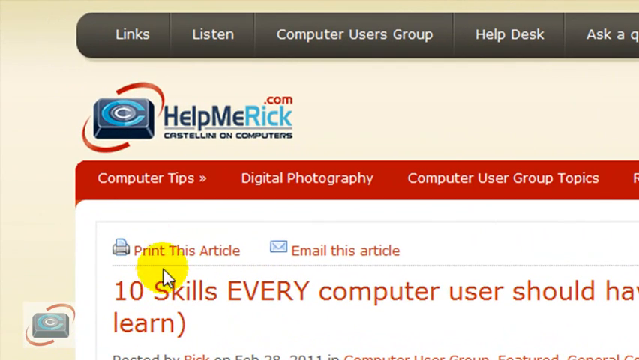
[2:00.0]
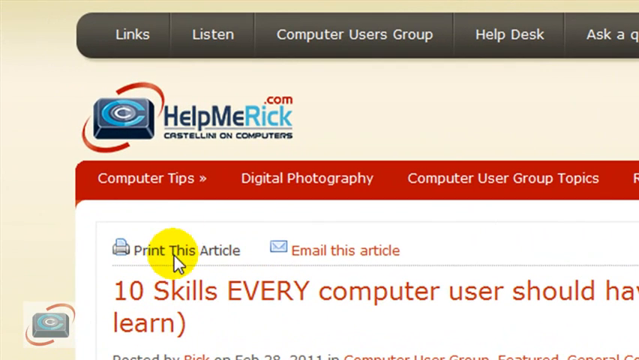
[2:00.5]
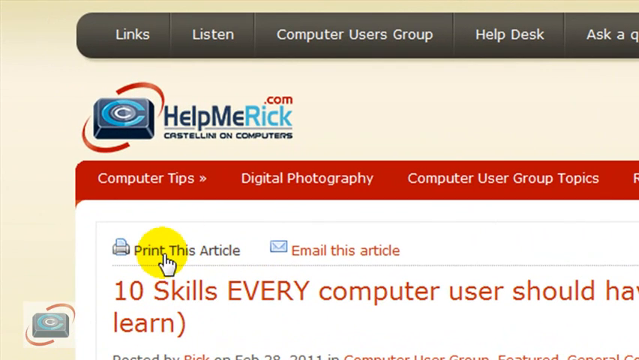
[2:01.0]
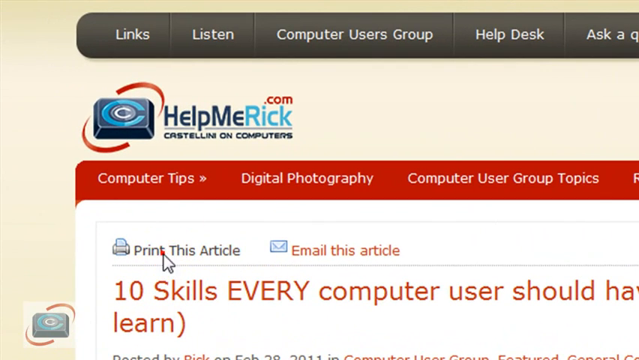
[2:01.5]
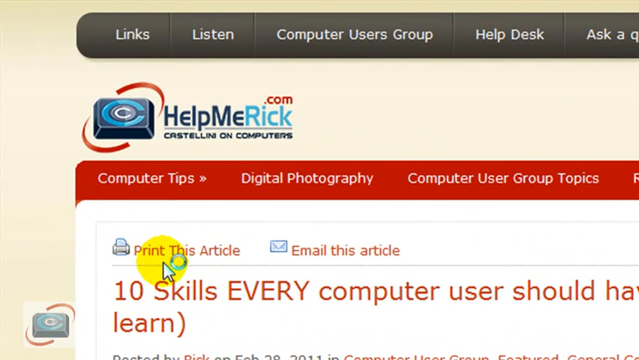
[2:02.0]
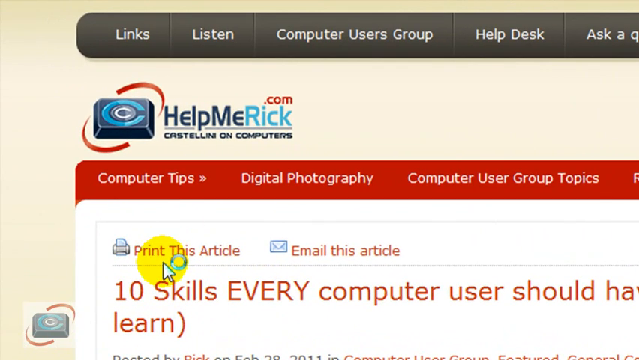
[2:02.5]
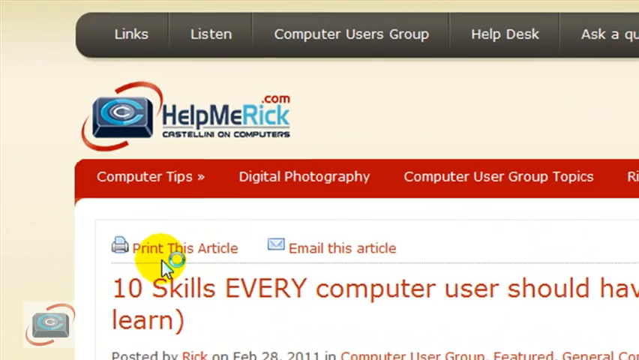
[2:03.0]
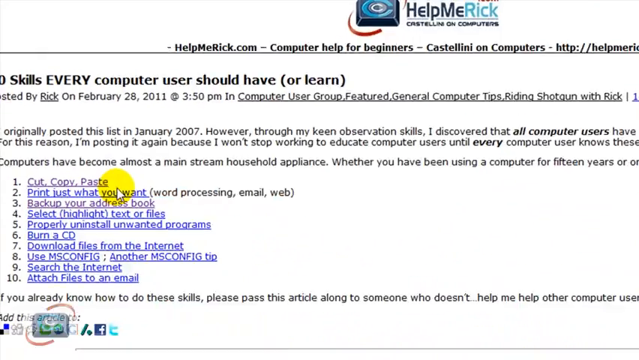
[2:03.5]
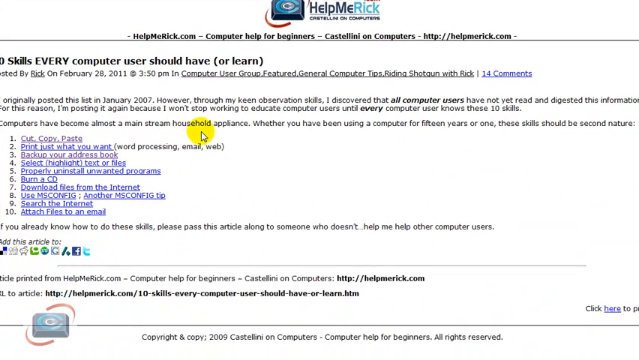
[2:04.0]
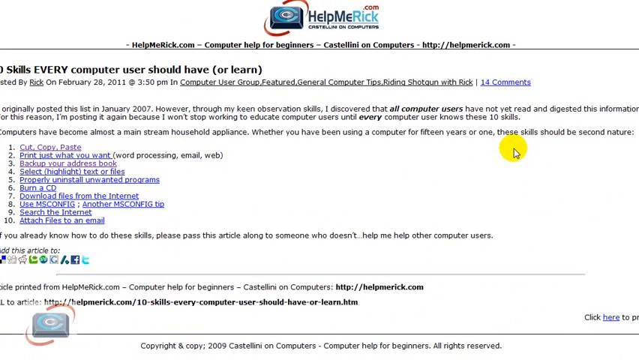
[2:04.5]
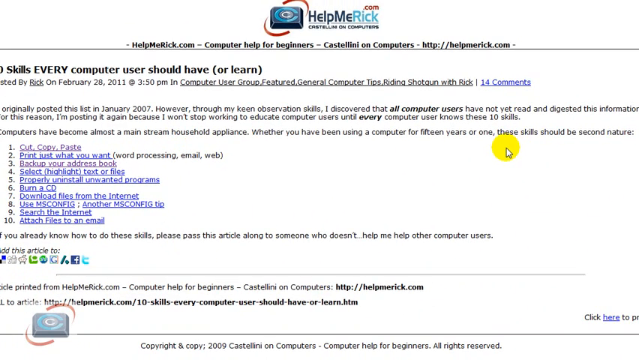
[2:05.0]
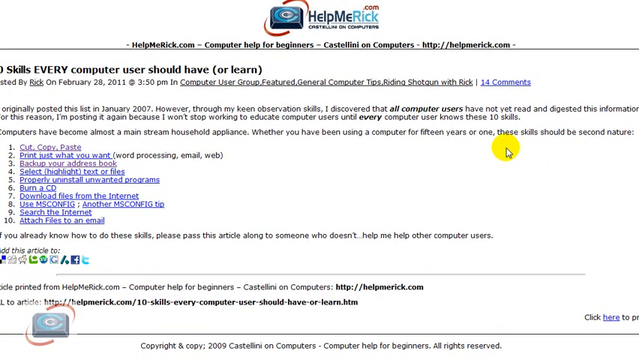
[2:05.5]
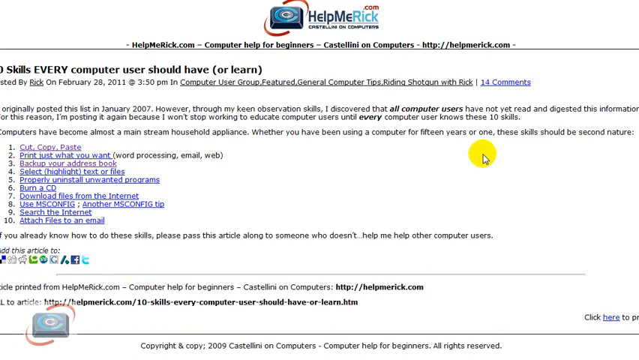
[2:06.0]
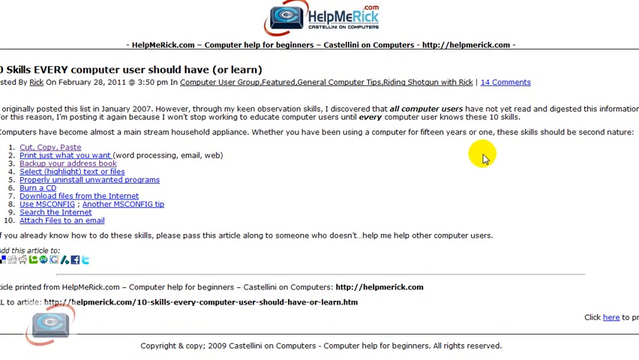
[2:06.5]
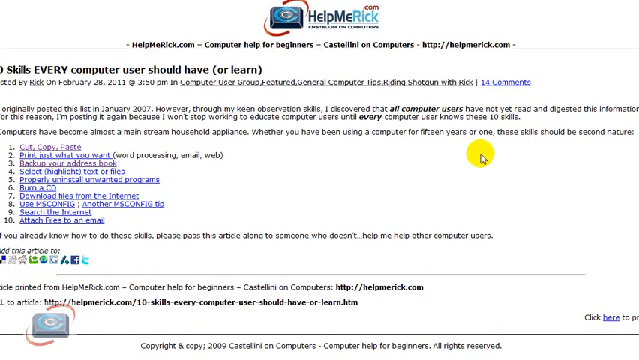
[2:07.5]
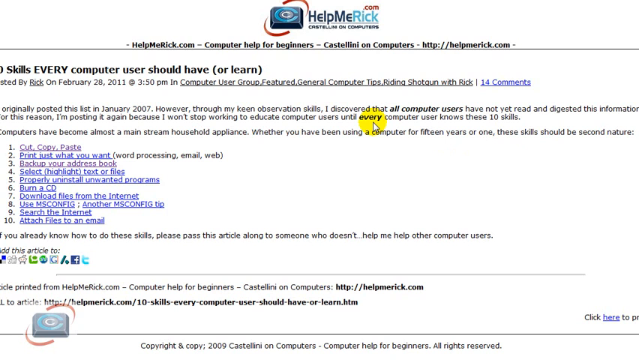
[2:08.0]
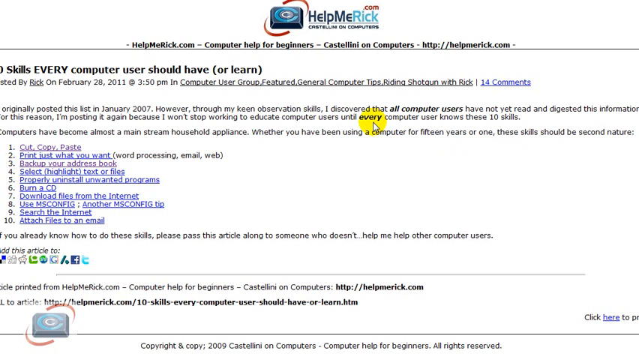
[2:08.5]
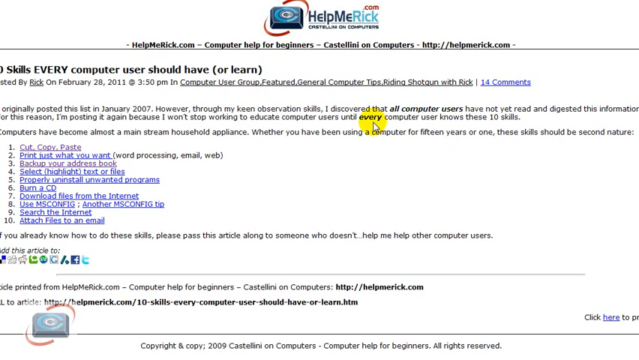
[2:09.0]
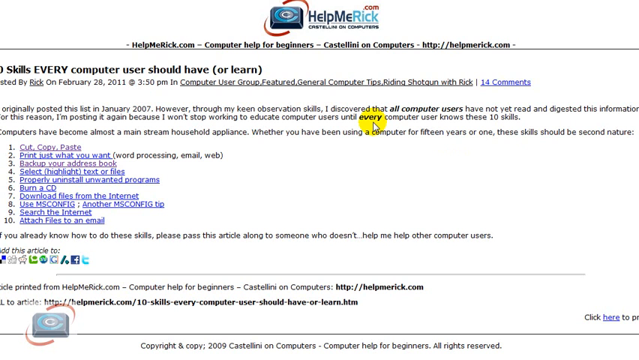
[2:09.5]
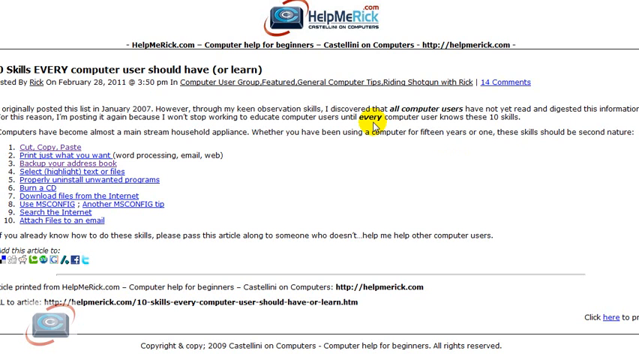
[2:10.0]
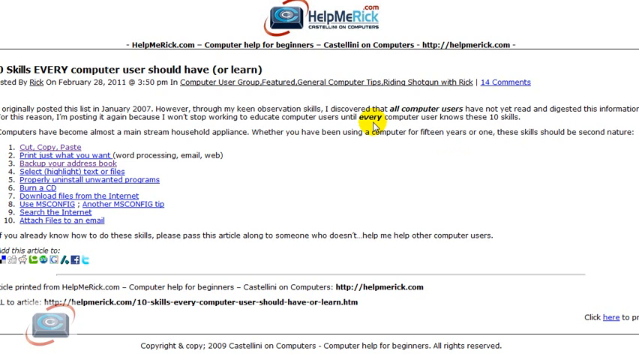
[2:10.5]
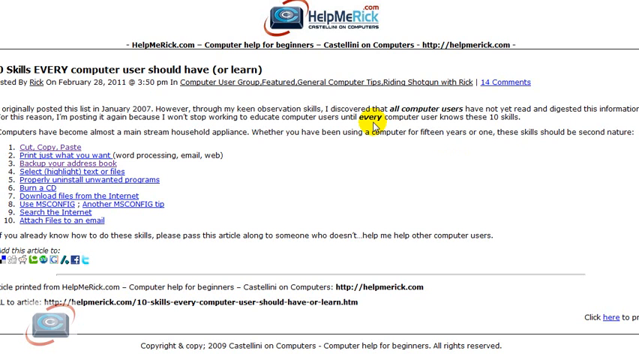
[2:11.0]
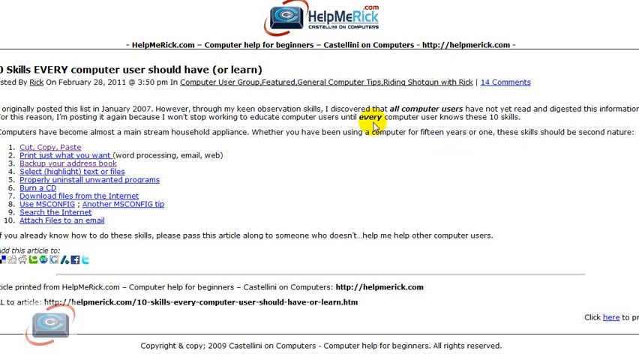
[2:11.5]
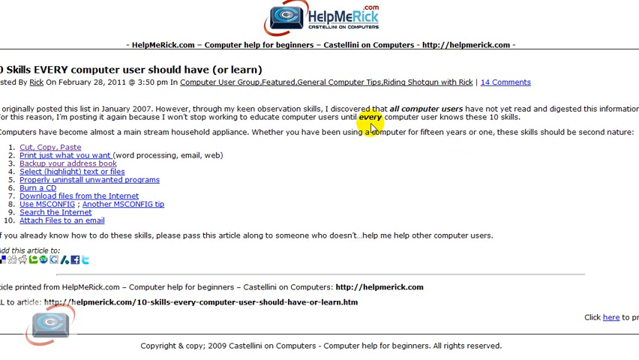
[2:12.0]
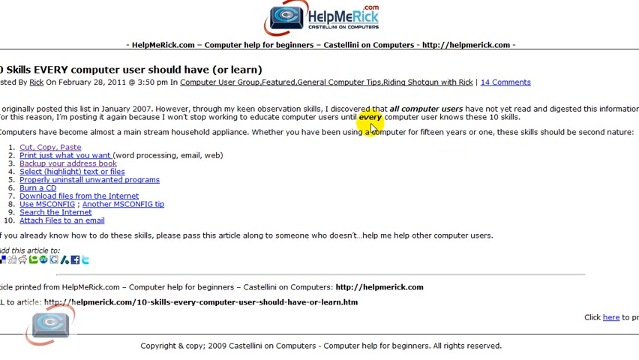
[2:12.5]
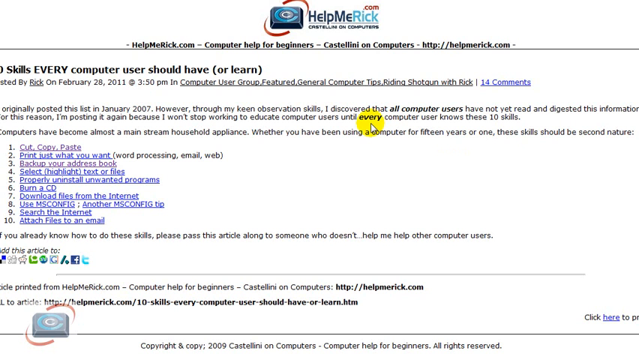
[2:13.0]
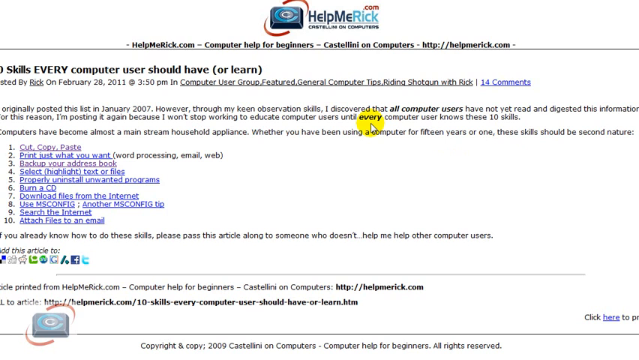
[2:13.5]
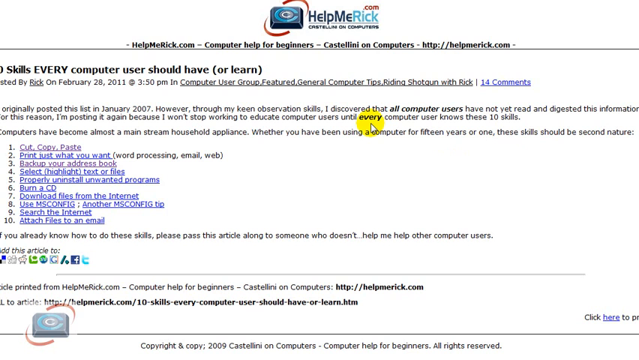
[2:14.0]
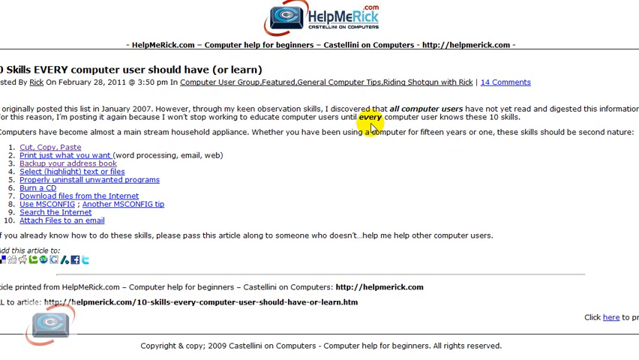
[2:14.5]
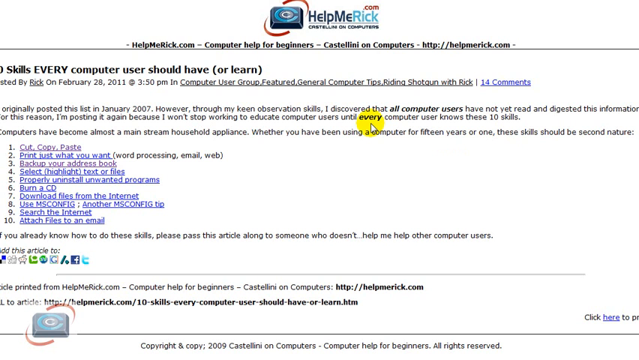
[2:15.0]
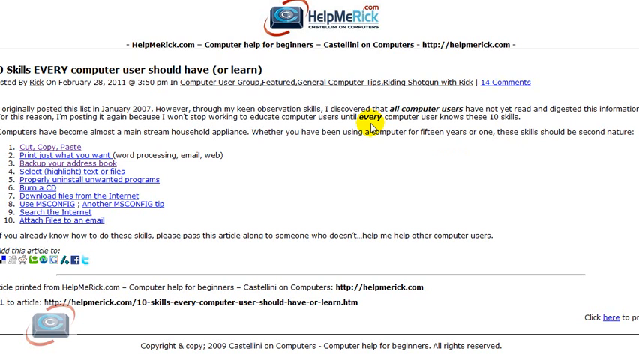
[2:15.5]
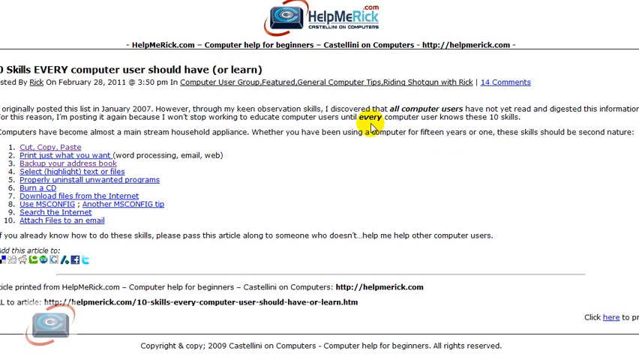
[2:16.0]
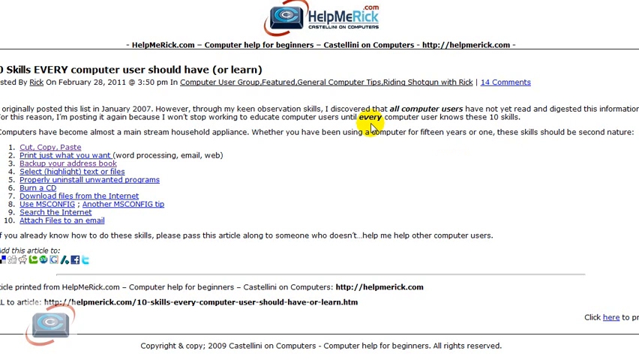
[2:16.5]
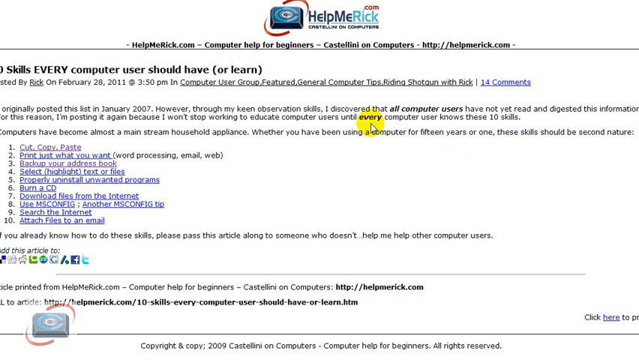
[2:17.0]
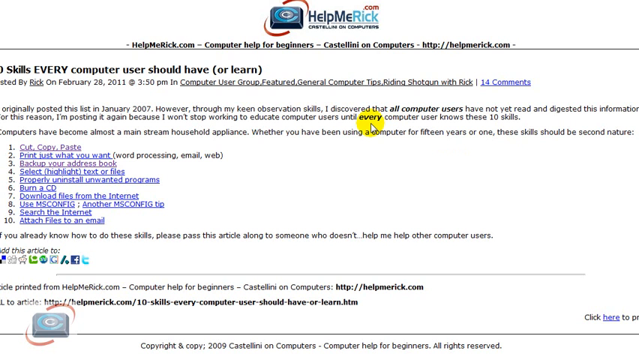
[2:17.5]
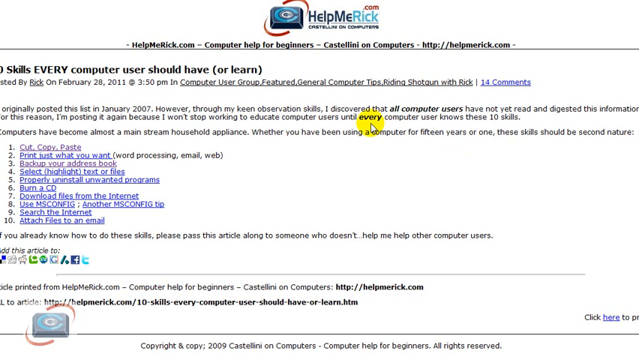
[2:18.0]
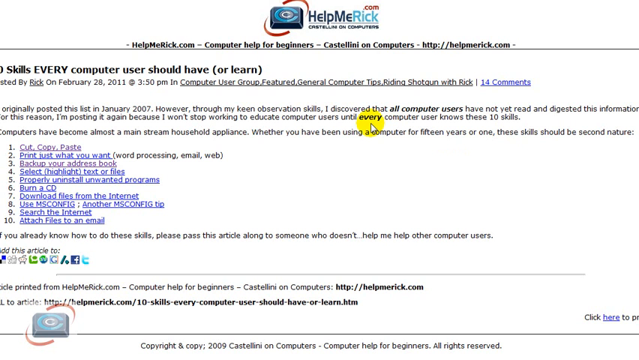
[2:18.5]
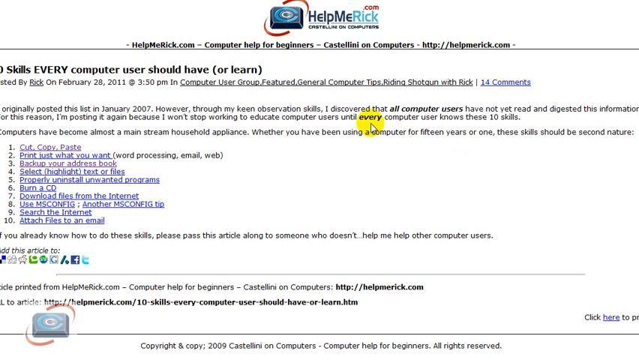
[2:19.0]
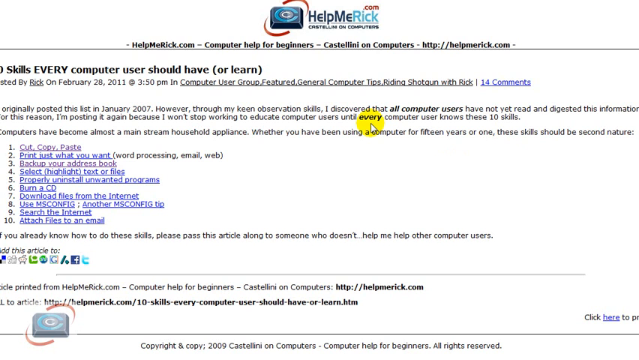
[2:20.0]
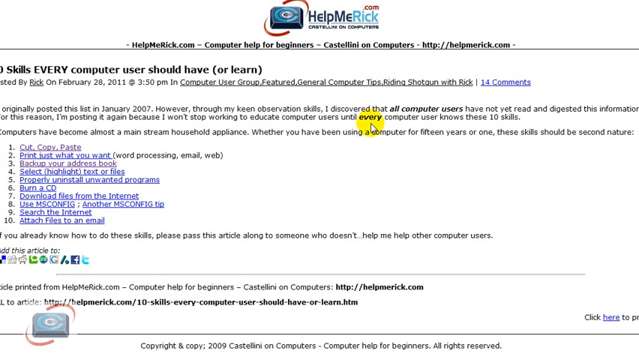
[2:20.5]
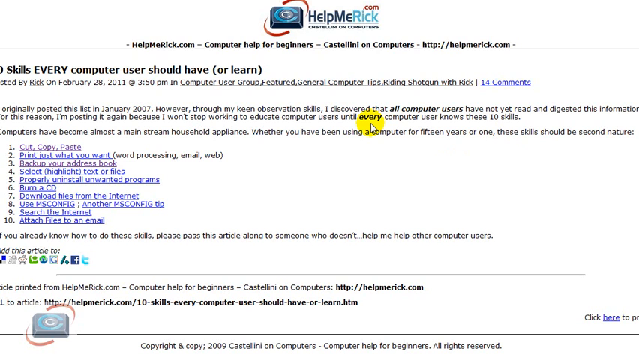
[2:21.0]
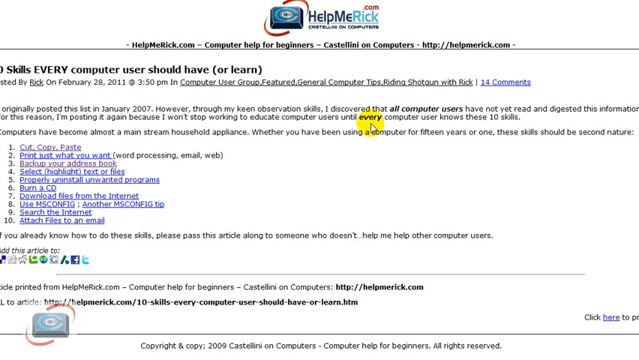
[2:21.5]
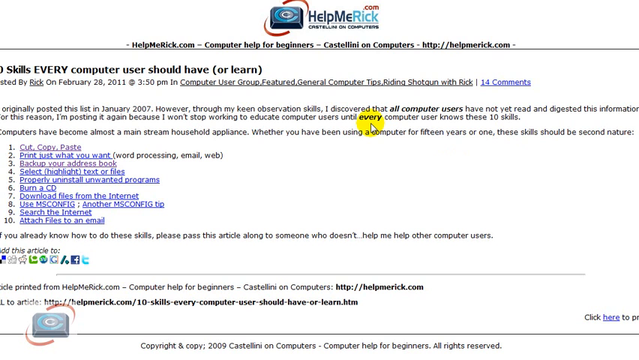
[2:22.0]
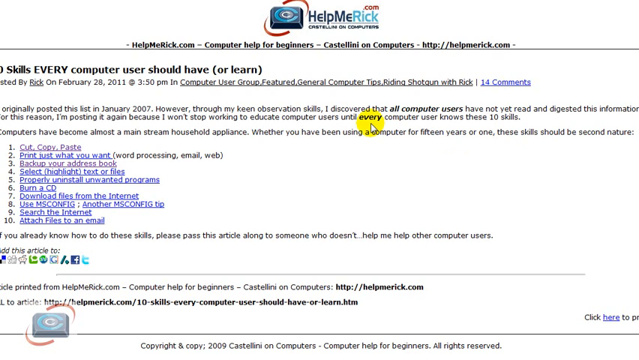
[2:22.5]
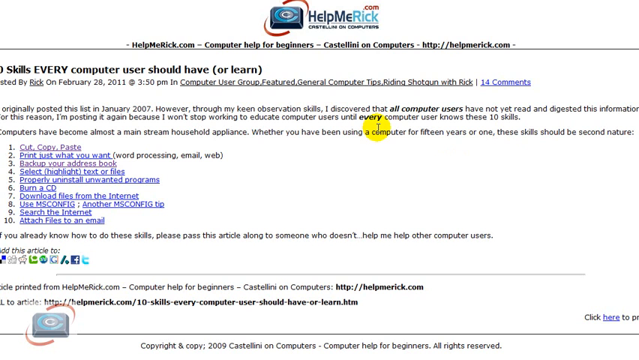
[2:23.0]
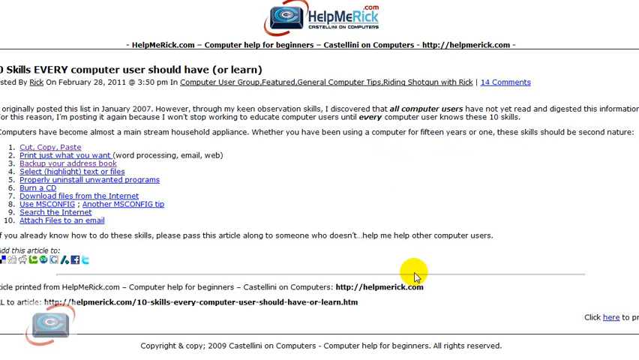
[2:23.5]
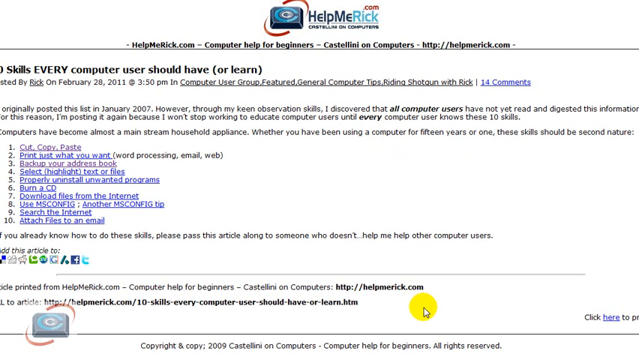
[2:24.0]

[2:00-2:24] The website HelpMeRick.com has a blue title. A person moves the cursor, highlighted with a yellow circle, and clicks print, which lights up a circle with several circles around it. The person keeps moving the highlighted arrow, then highlights the word "every" in the top paragraph and stays on it for a while. Purple lines numbered 1 to 10 run through the middle of the article. The cursor drops to the bottom of the screen, where "Caselli and computers" appears underneath HelpMeRick. The cursor moves constantly. At the top of the page the text reads "skills EVERY computer user should know".